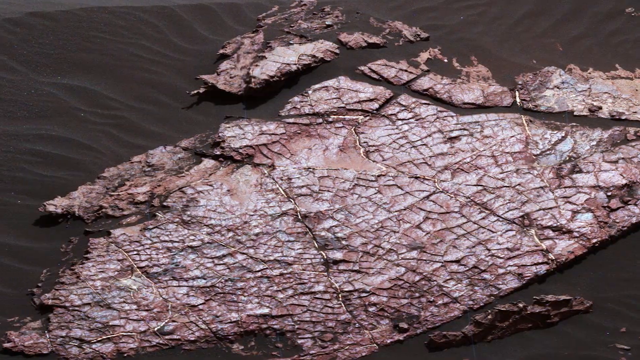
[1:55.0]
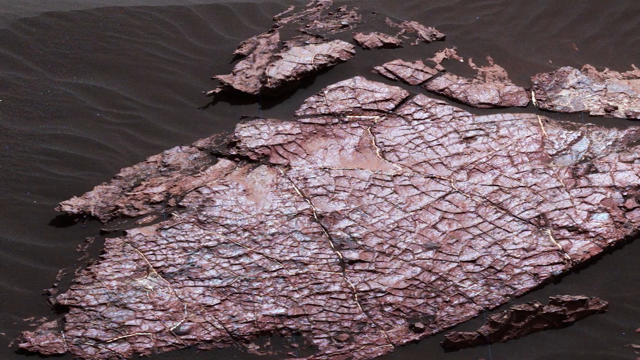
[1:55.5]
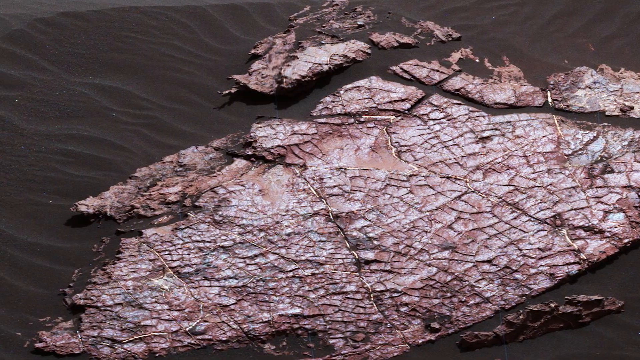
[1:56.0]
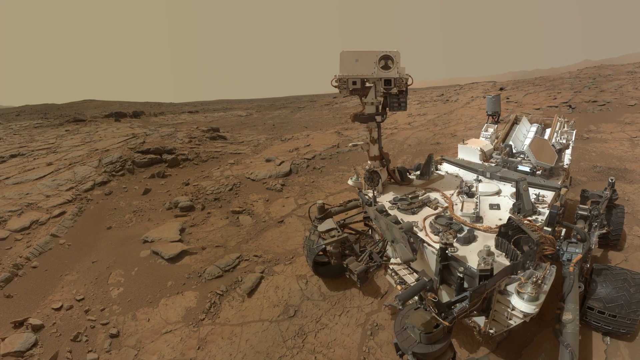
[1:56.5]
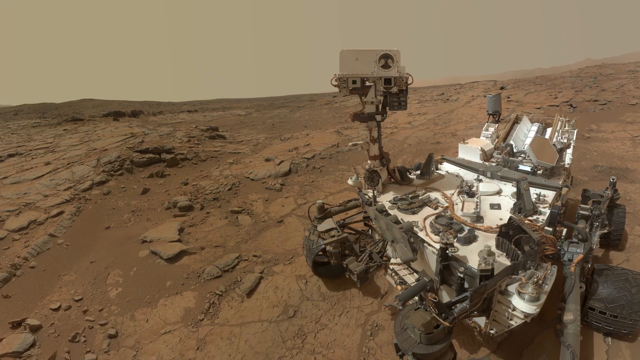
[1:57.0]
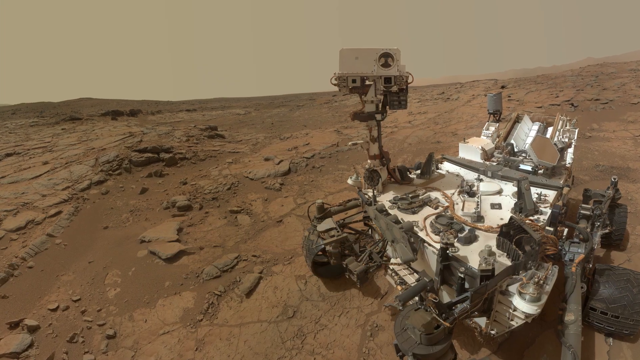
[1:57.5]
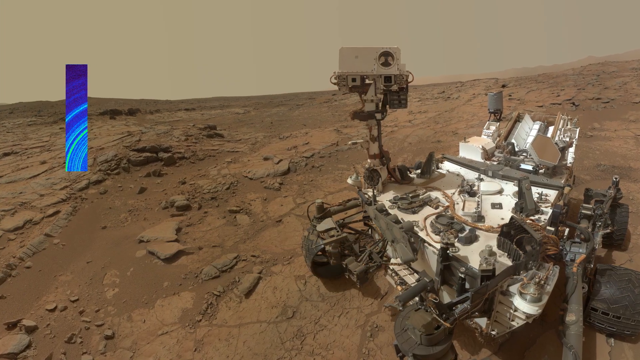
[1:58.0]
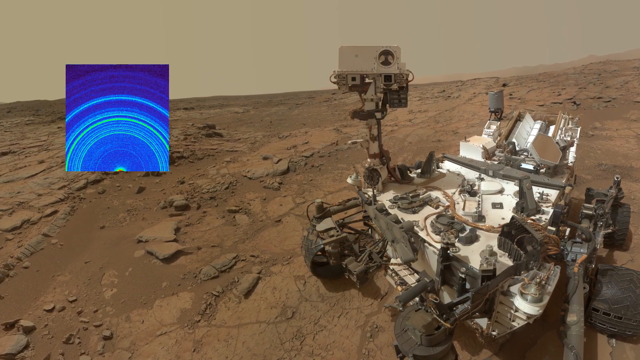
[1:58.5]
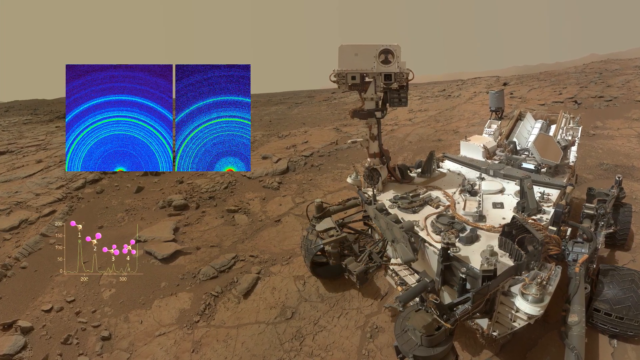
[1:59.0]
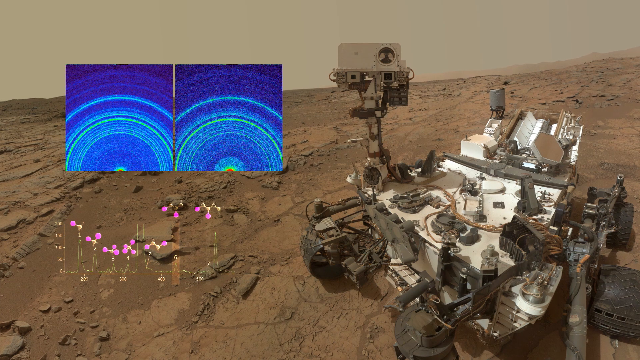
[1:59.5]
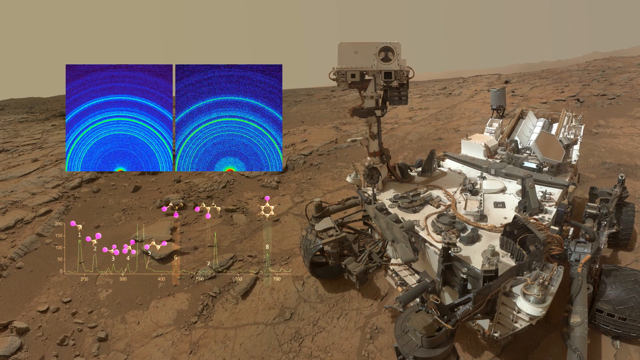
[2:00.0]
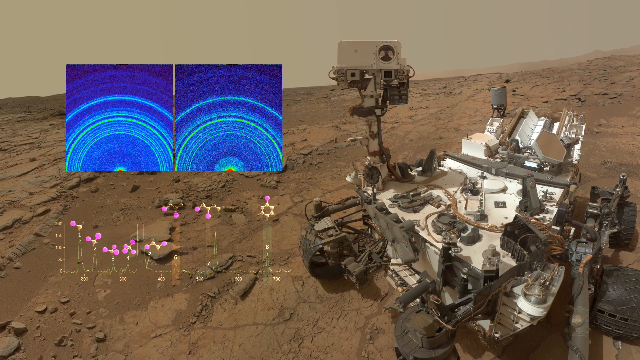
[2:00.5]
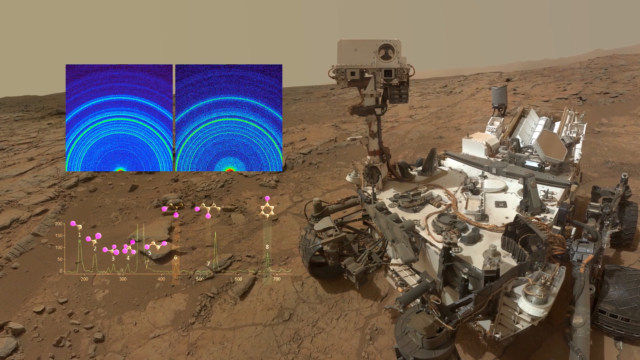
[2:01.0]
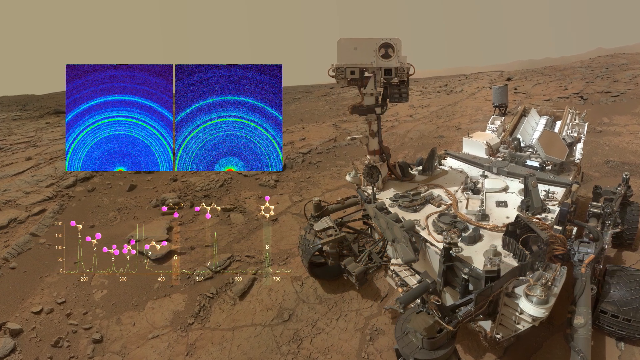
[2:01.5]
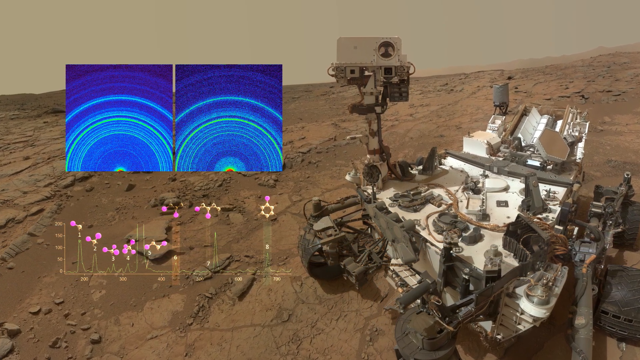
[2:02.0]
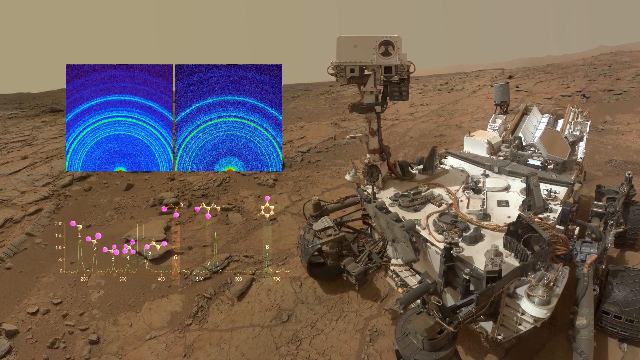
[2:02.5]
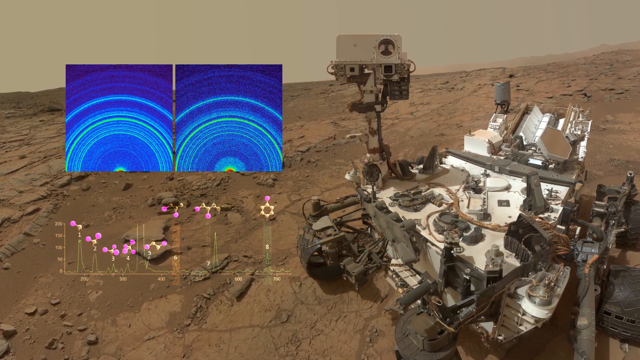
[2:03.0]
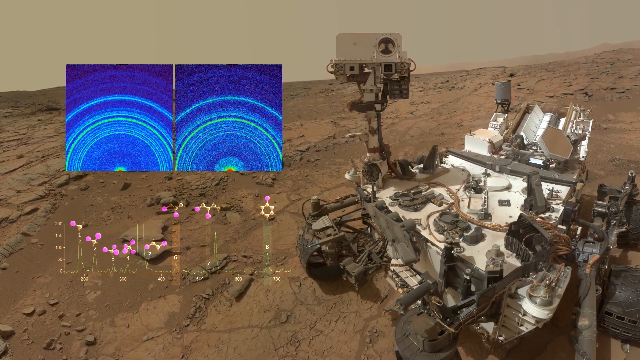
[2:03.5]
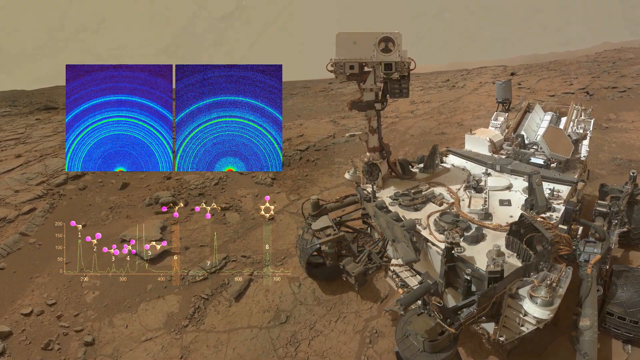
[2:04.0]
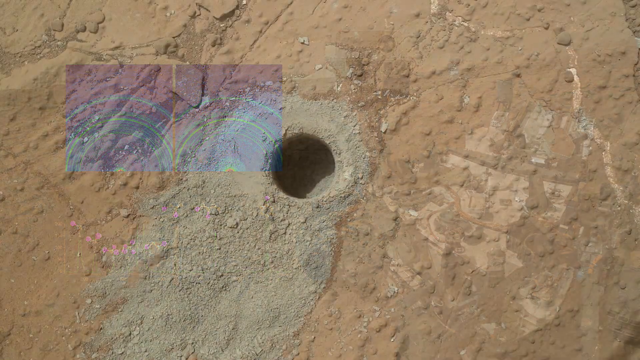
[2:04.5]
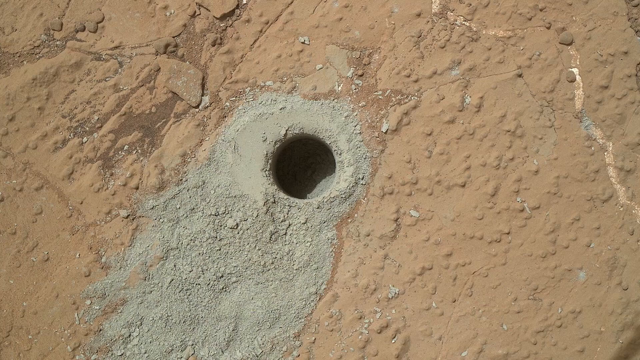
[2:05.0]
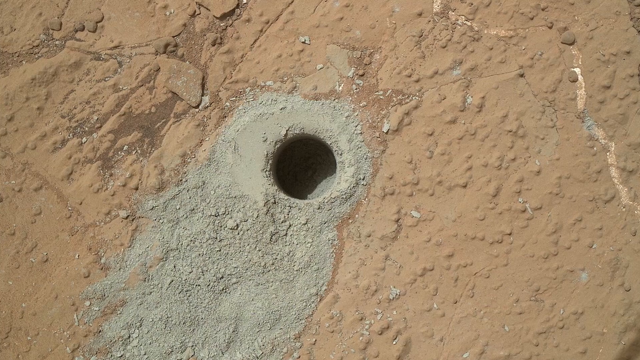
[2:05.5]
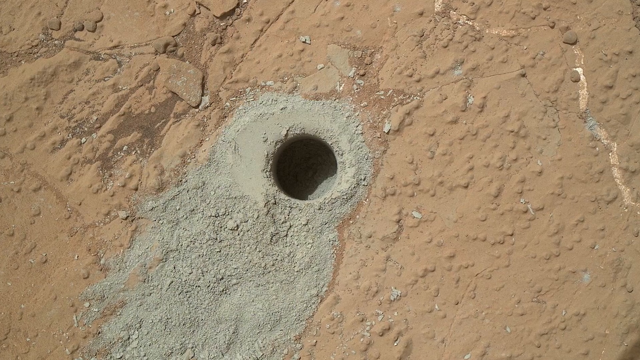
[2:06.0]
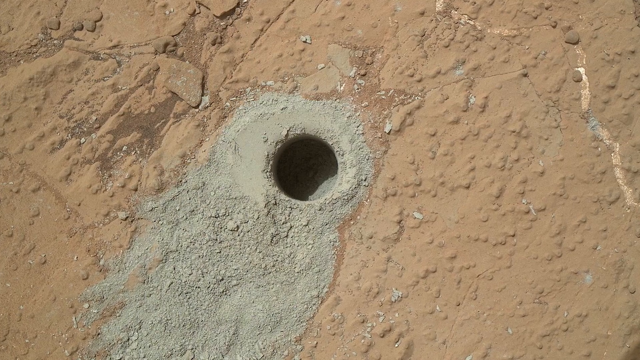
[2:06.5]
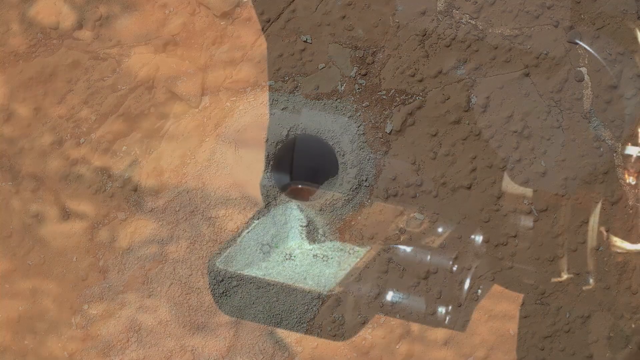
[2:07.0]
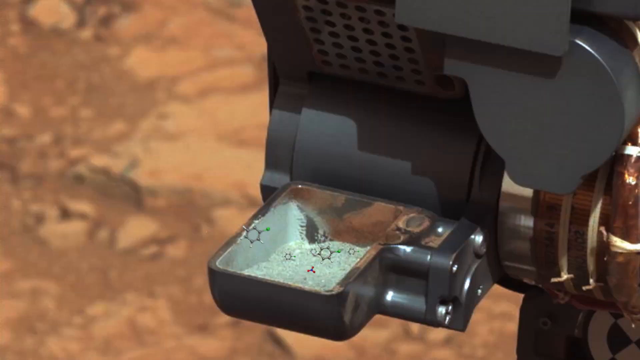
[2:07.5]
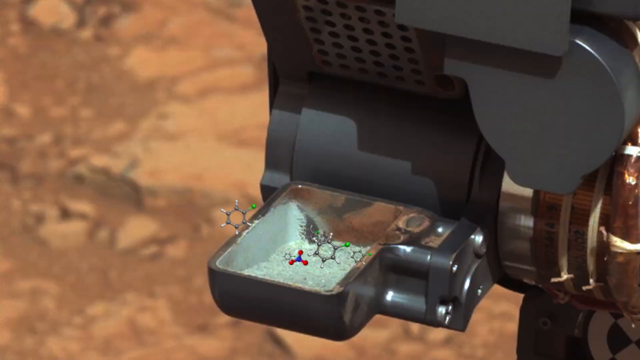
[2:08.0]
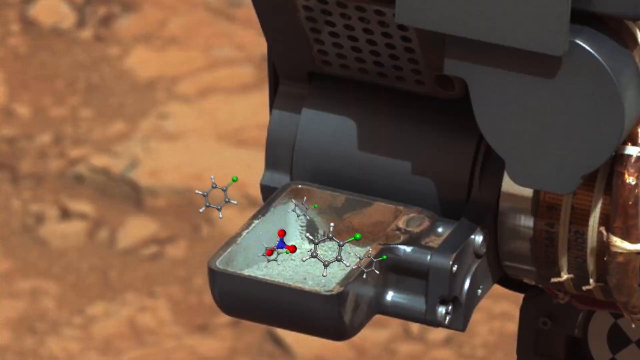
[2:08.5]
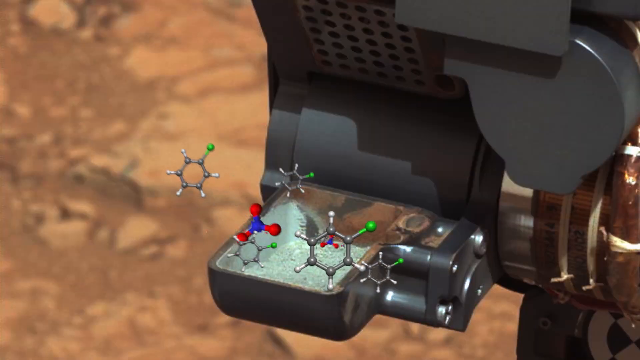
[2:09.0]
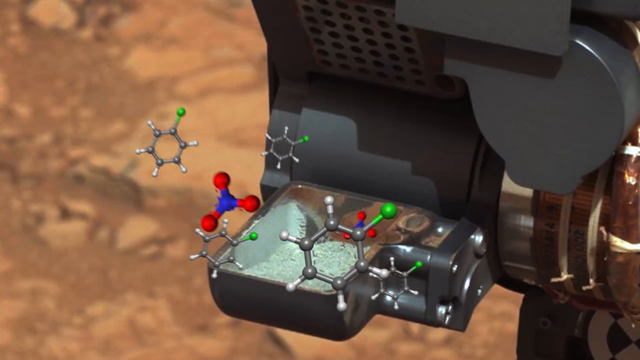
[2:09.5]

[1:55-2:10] A shot shows the smooth, gray, lizard-skin-like terrain, likely a picture taken by the rover during its voyage. The shot changes to a photograph of the rover, and on the left side of it are a couple of maps in dark blue and blue with a little red and yellow toward their centers; they almost seem to show a point radiating outward, with curving lines going from lighter blue to darker blue as they travel outward. Underneath are several gray and pink molecules. Next is a picture of a hole that appears to have been drilled in the crater, likely to take samples, with a lot of gray dust around it. Then a photograph of the rover shows several 3D illustrations of molecules coming out of the camera on its front. These are gray in base with little rounded points on the ends in varying colors: some green, some blue and some red.